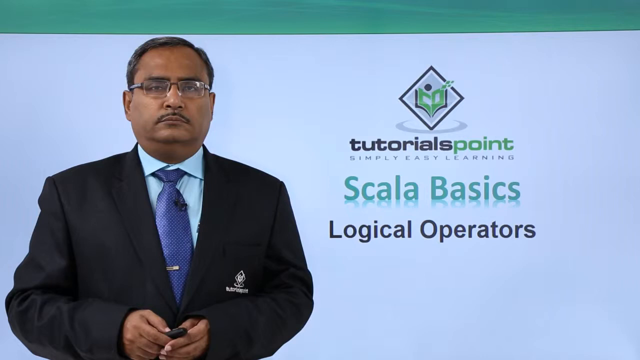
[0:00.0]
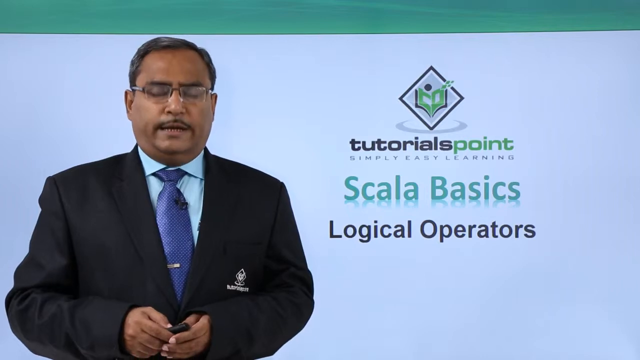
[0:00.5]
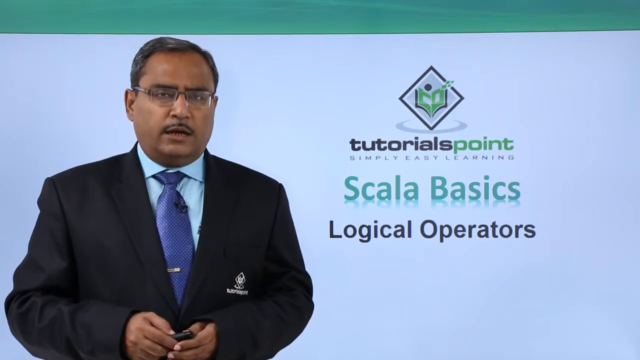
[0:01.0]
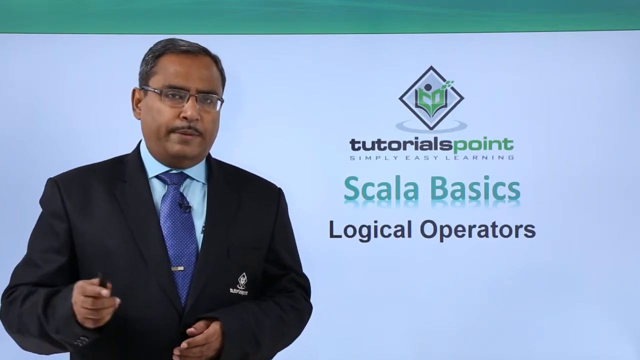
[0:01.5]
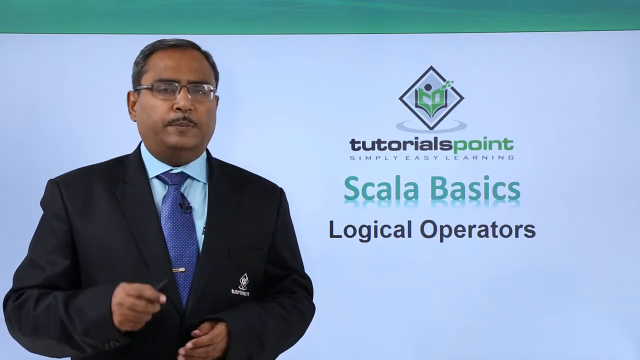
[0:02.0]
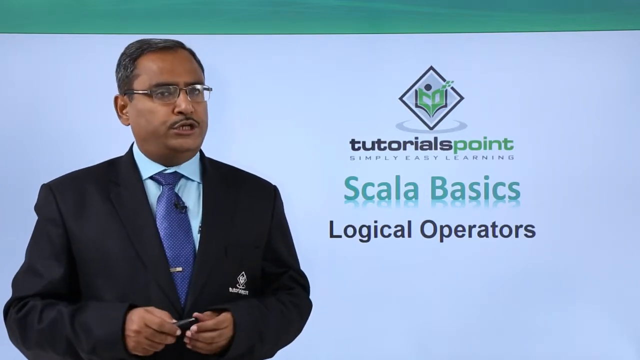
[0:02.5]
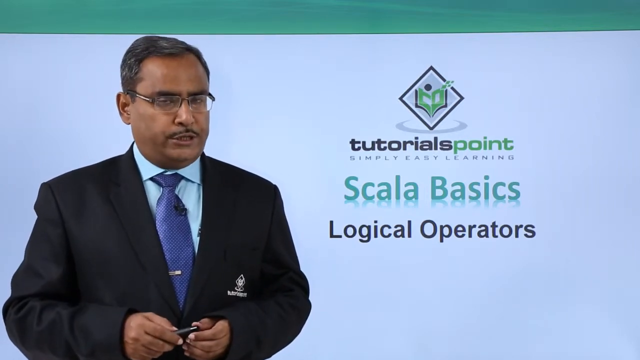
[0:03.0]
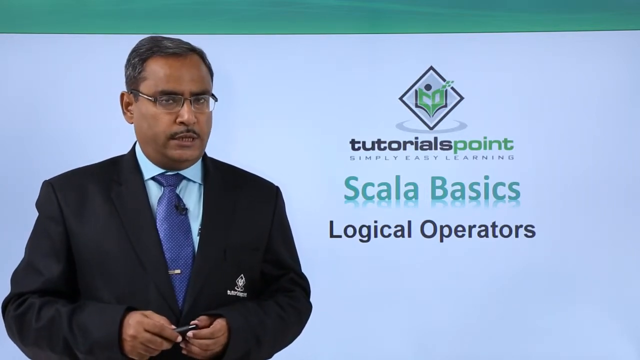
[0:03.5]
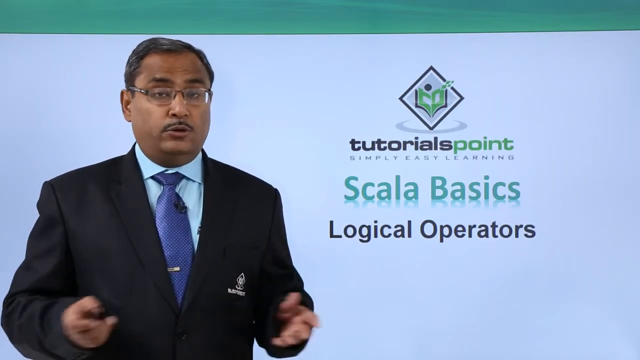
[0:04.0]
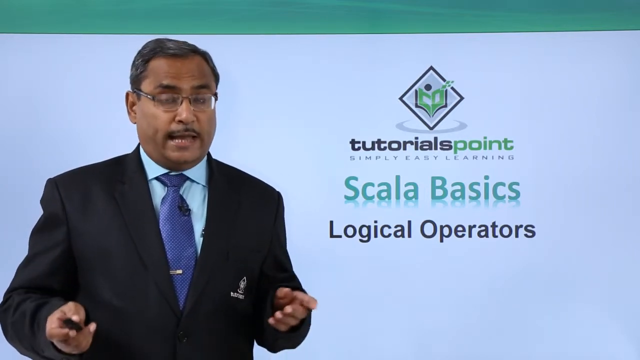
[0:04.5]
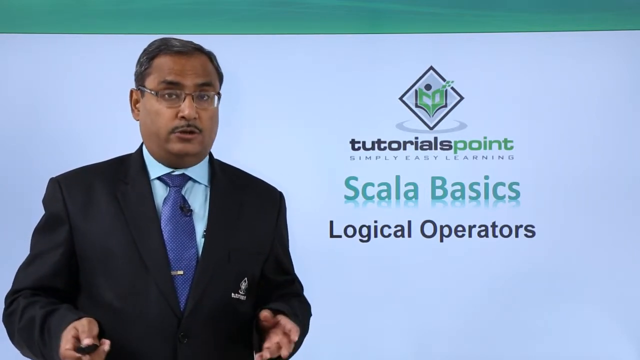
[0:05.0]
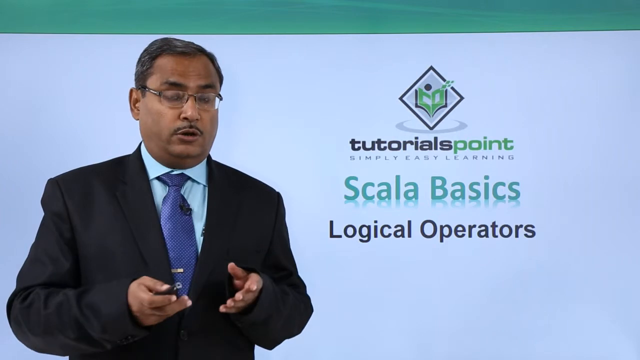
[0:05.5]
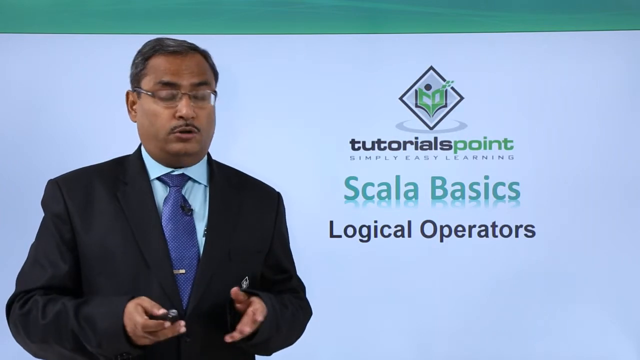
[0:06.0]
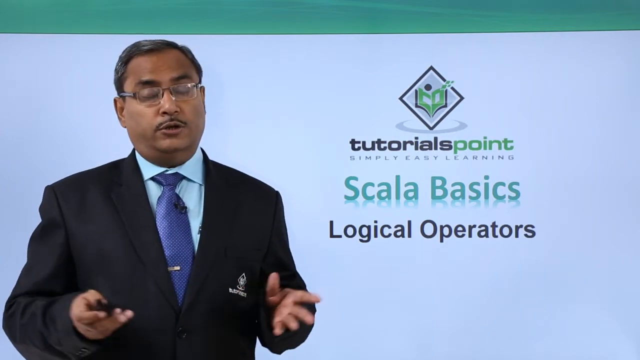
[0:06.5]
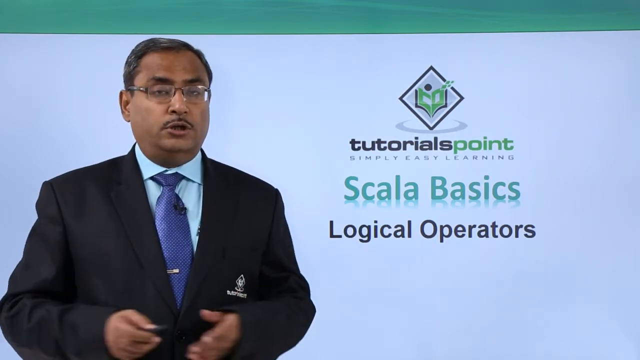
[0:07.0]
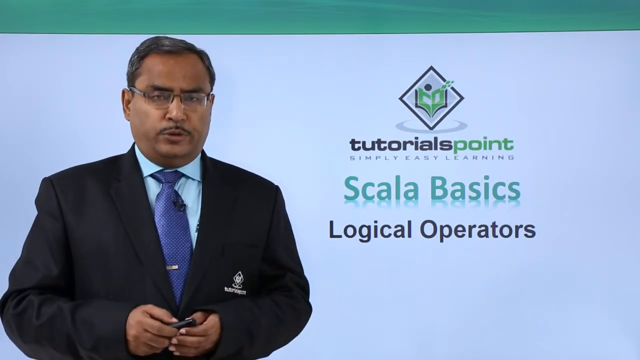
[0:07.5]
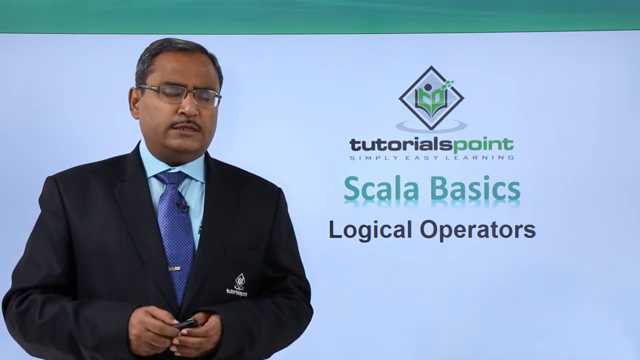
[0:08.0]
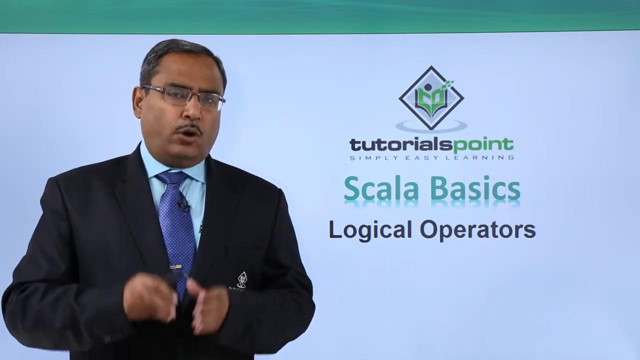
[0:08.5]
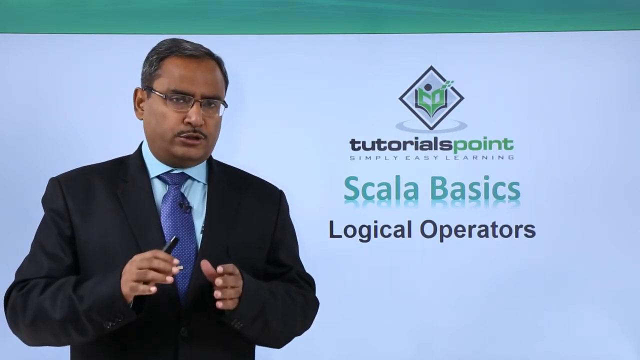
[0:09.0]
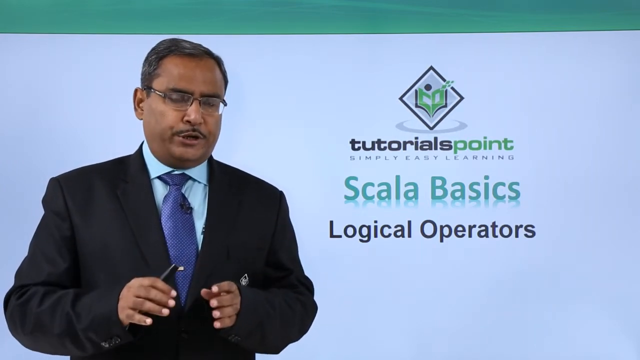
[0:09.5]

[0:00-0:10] The video is a tutorial from Tutorials Point, Simply Easy Learning, on Scala Basics using Logical Operators. The topic is logical operators and their use with Scala in the Scala workspace, with an operator demo.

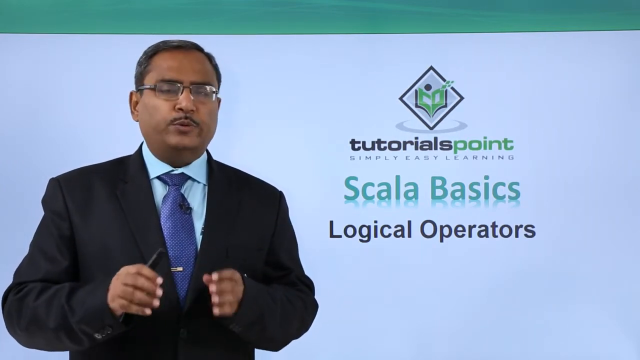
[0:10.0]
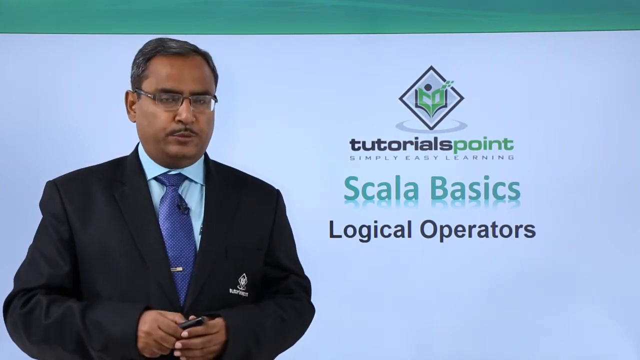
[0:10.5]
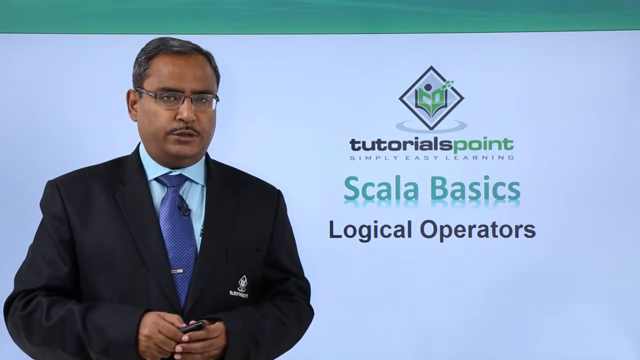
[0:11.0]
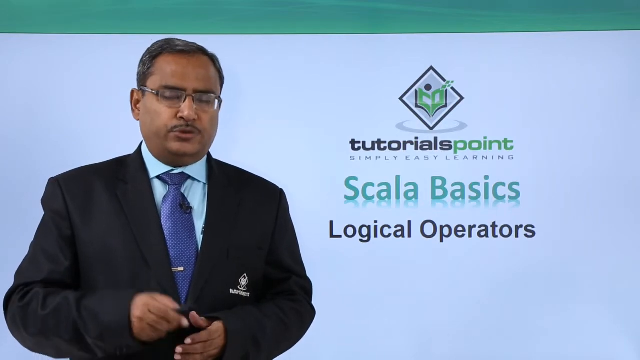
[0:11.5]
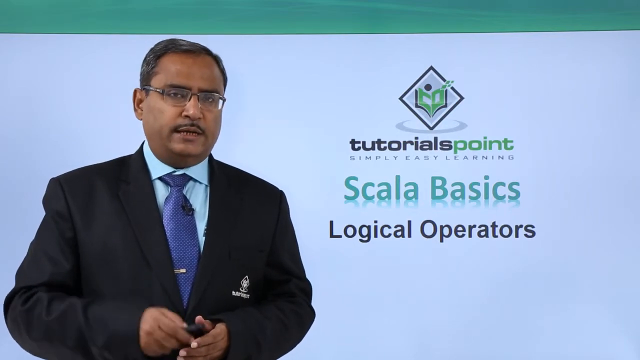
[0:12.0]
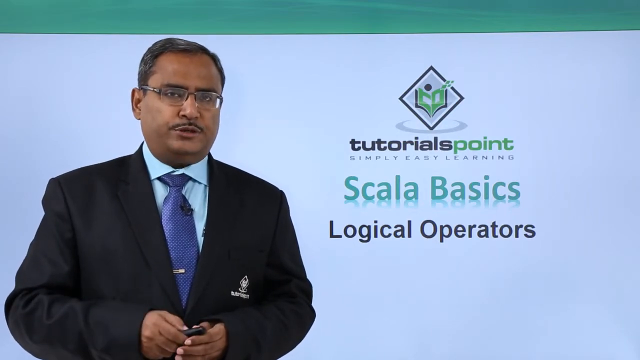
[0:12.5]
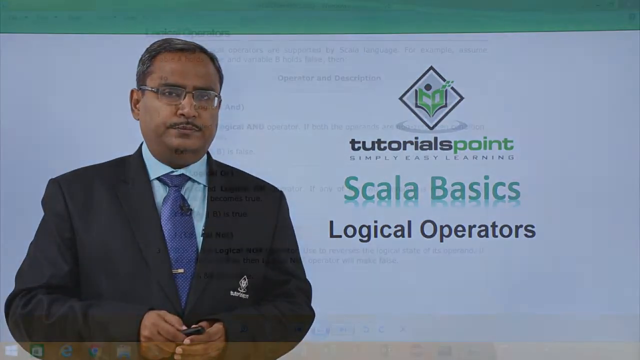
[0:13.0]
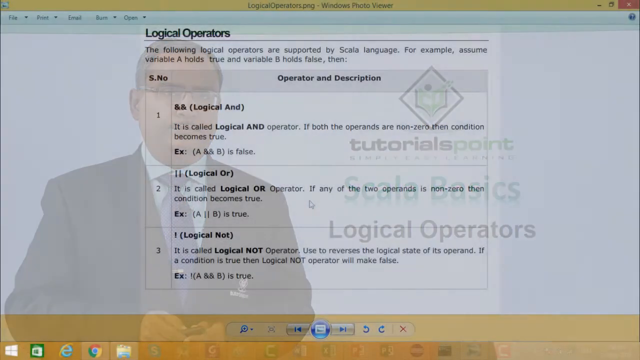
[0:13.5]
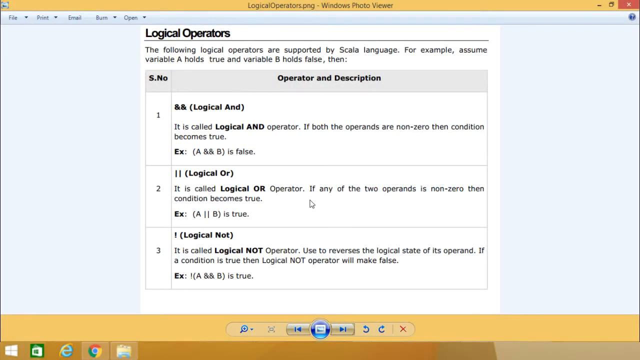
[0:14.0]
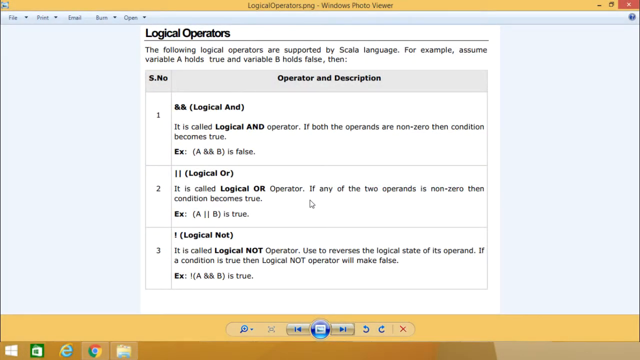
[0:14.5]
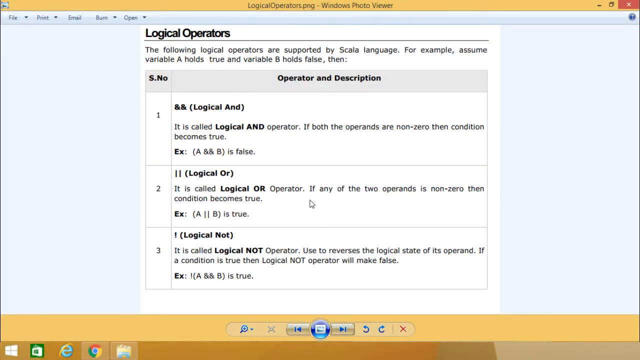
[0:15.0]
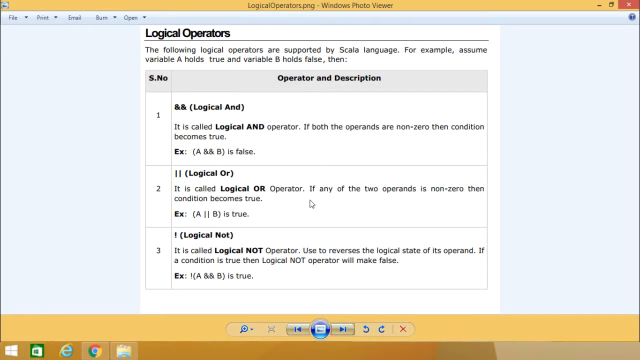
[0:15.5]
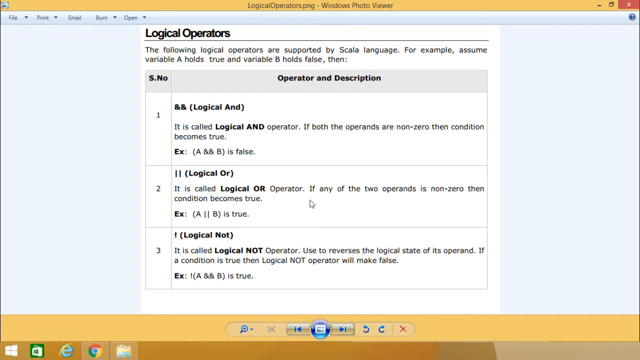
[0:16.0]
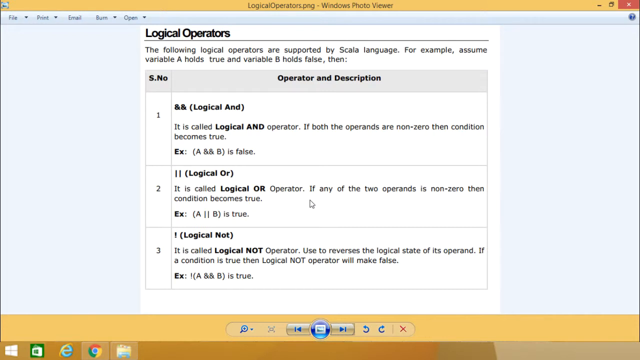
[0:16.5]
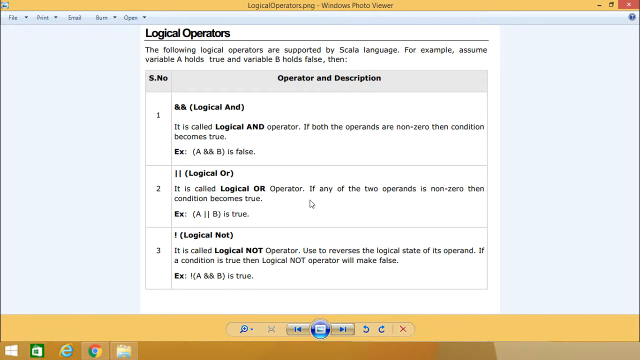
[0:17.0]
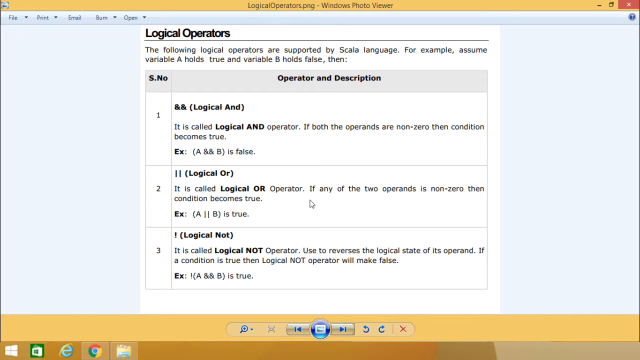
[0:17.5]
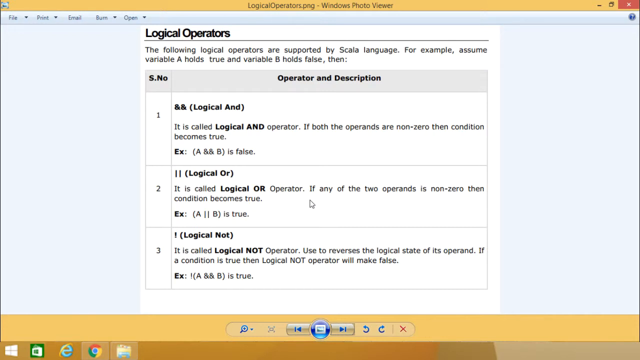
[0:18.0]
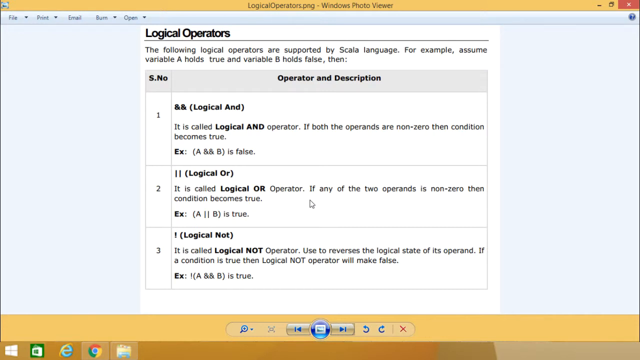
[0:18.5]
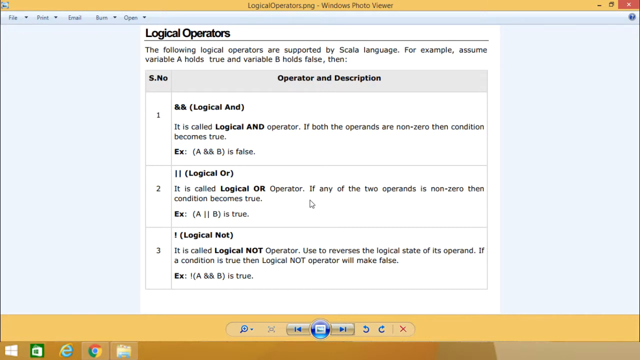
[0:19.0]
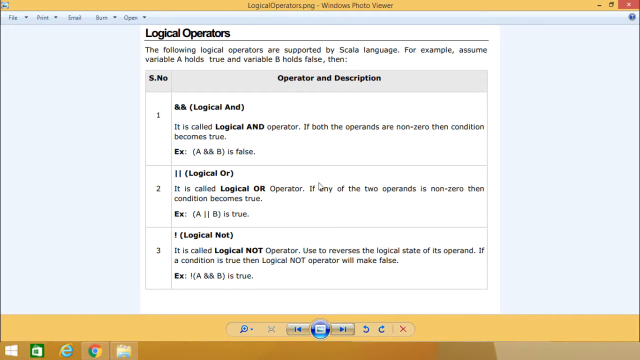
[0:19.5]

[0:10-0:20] The Tutorials Point, Simply Easy Learning page on Scala basics using logical operators is shown. The page lists the logical operators supported by the Scala language, with an example that assumes variable A holds true and variable B holds false, followed by the operator and description of three logical operators. The first of these is the logical and operator.